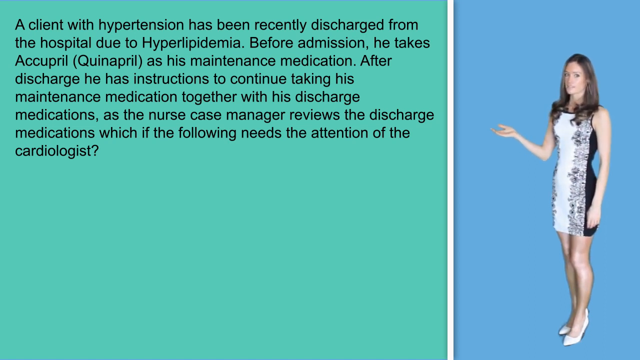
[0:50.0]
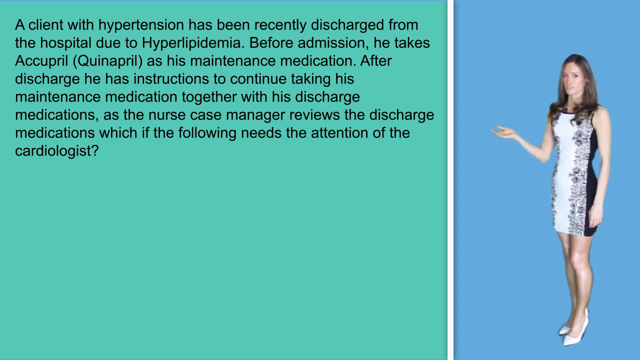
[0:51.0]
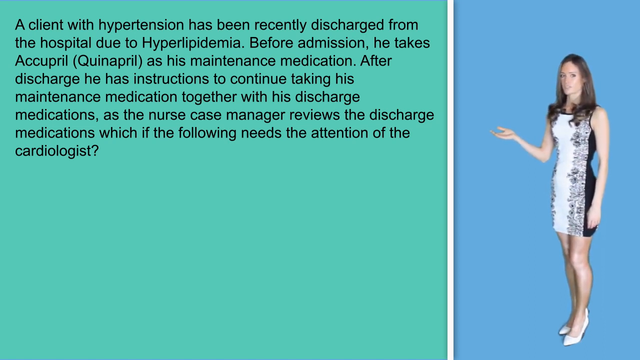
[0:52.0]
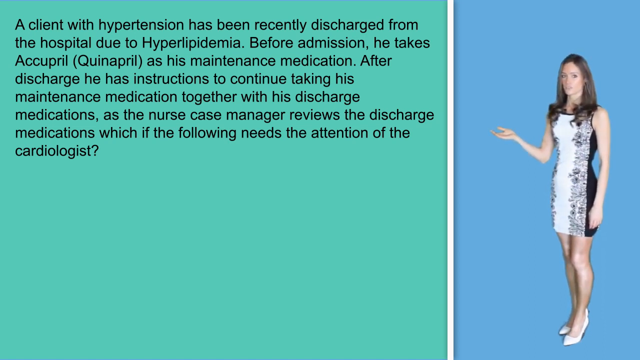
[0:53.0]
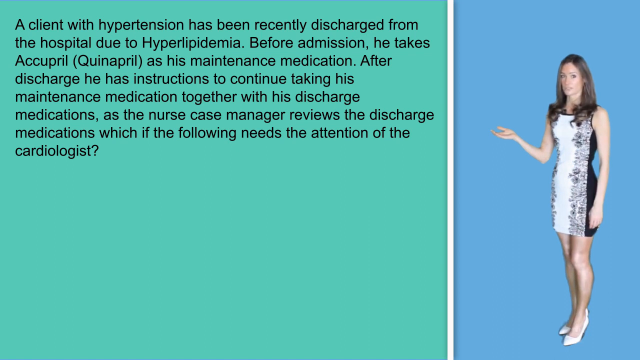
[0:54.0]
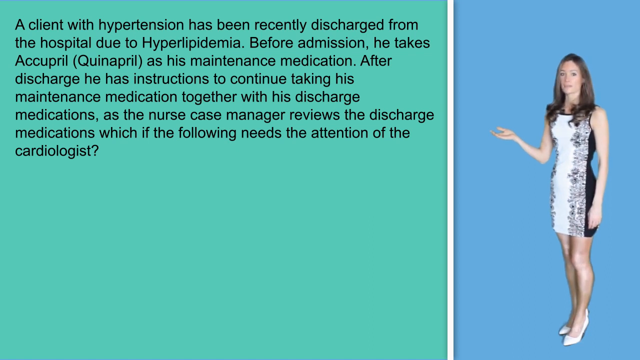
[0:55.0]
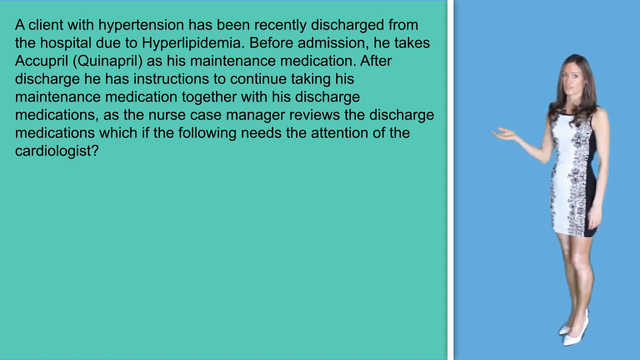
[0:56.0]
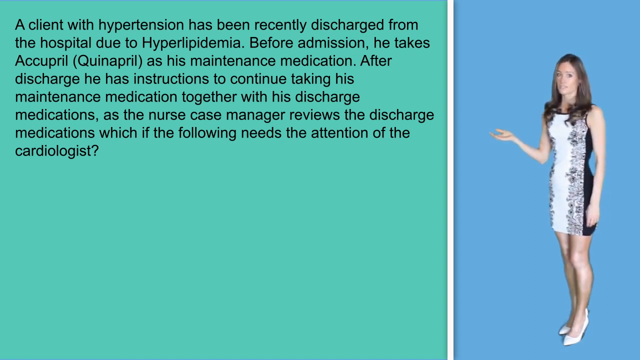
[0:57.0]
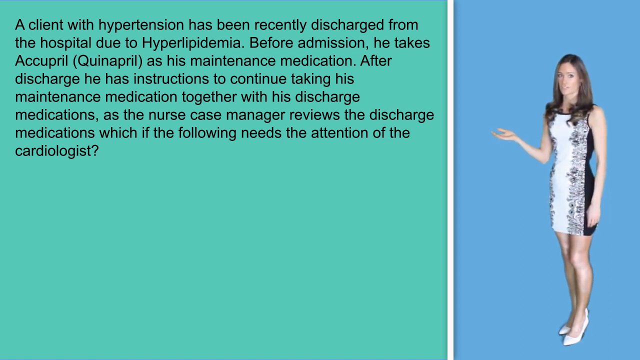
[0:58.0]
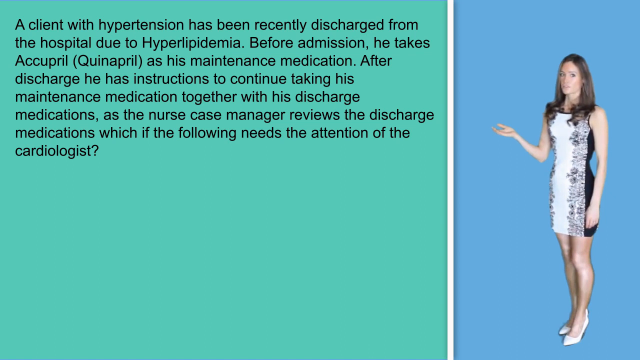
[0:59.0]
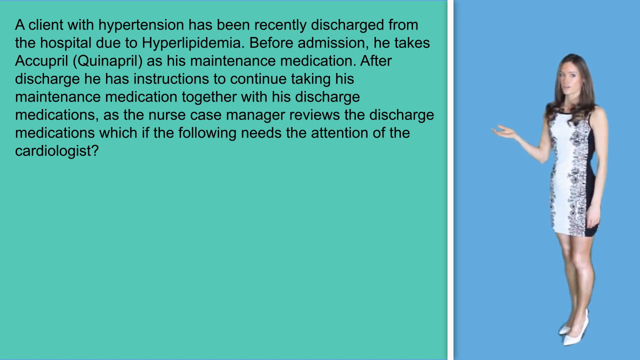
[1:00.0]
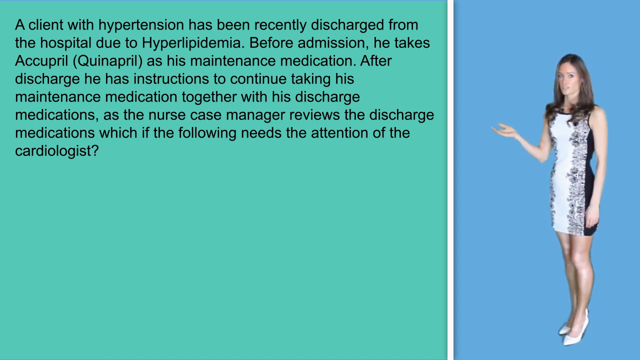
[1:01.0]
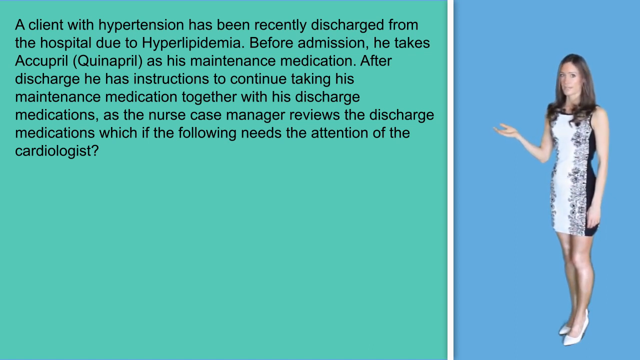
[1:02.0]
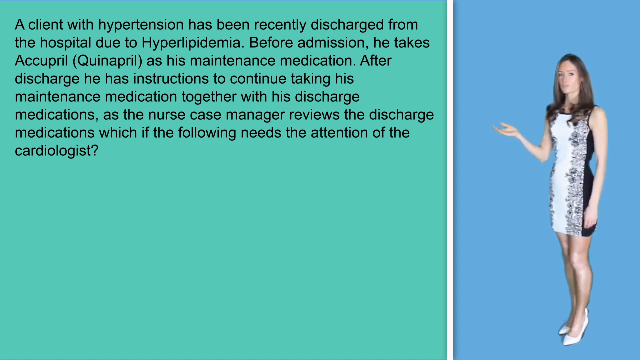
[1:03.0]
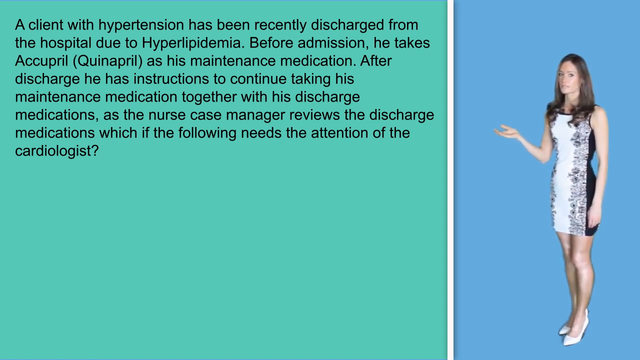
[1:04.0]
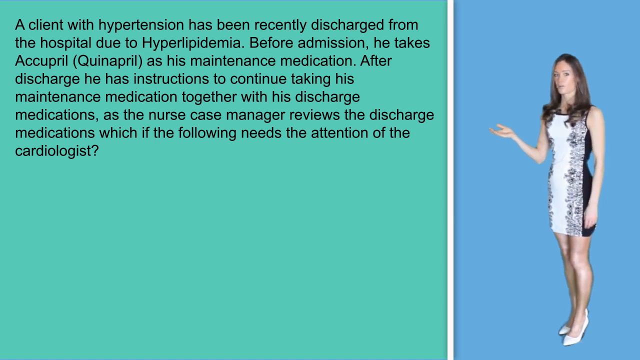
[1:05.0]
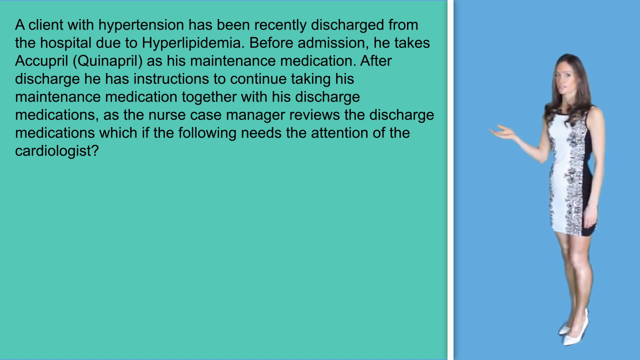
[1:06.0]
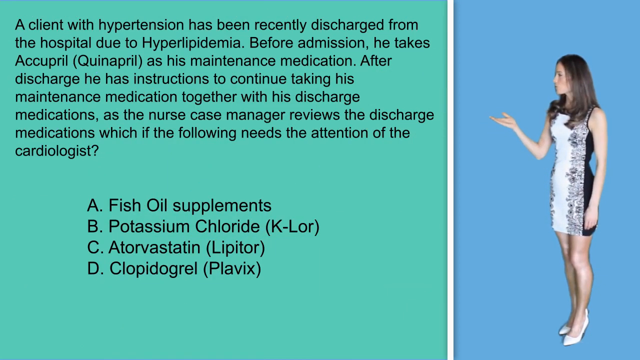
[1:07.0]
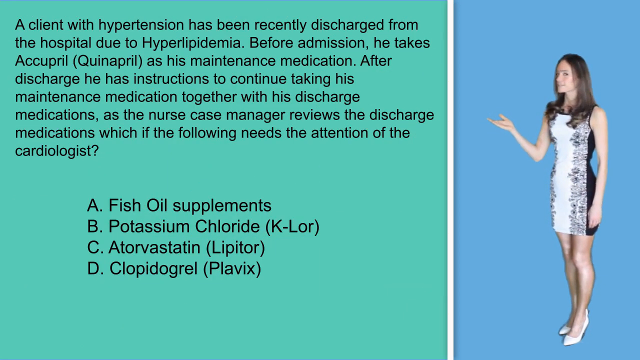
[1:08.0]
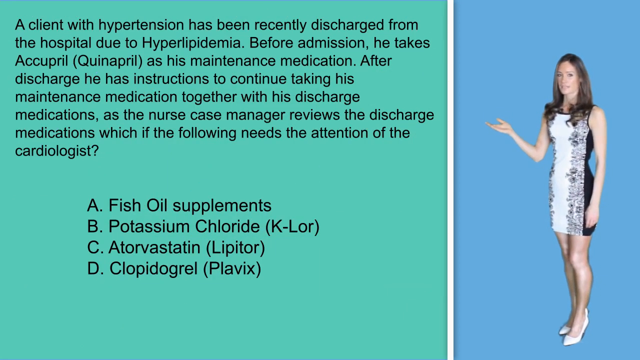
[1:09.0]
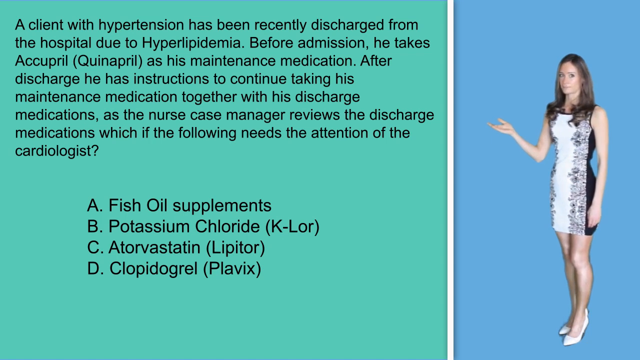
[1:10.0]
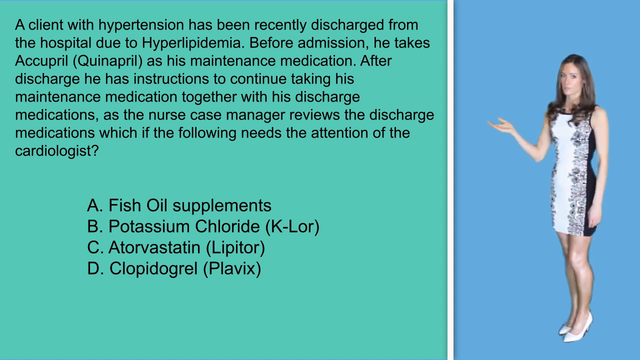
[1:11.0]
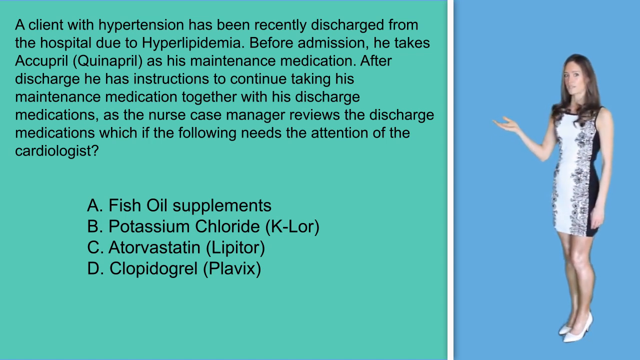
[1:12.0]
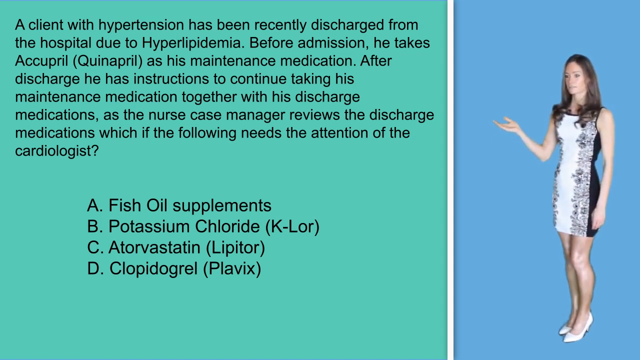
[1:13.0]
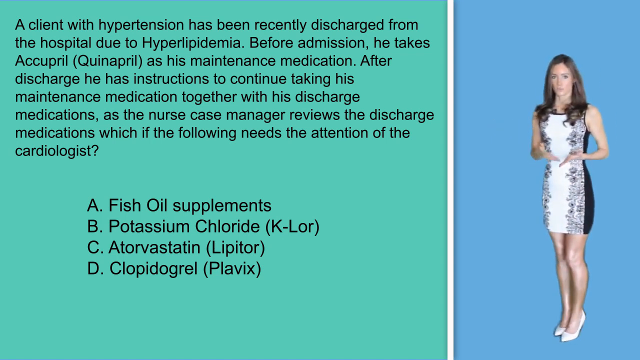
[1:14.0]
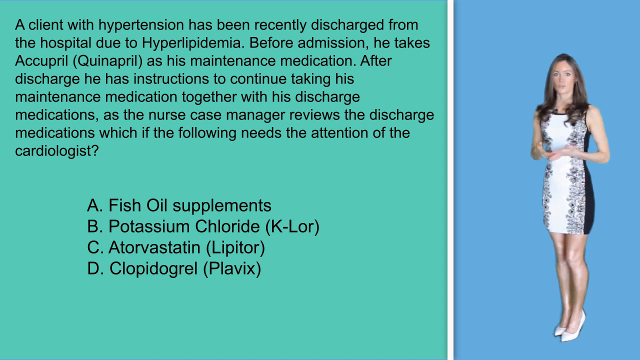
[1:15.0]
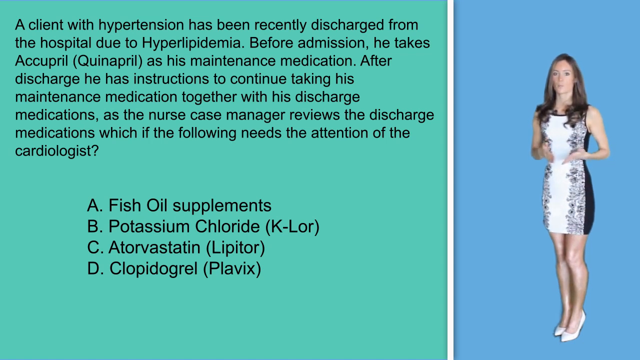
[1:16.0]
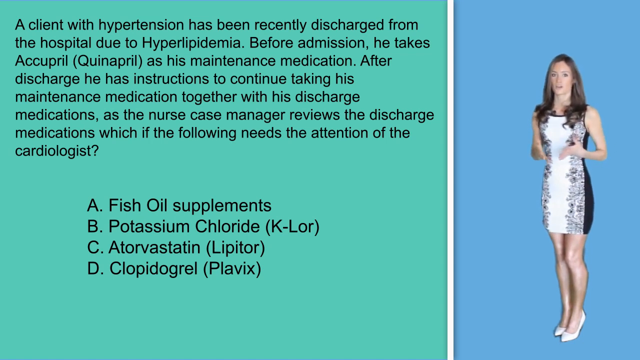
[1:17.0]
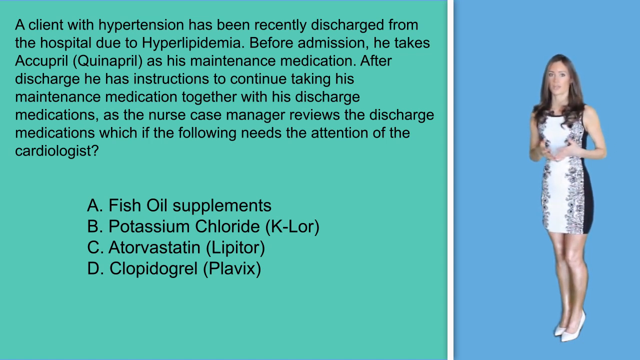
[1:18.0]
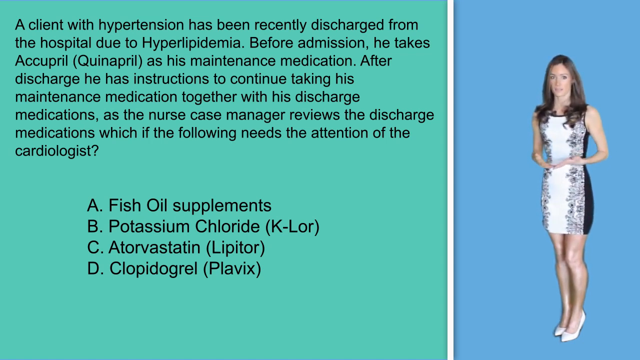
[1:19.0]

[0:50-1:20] On the right, the woman in the black and white floral dress, with long dark hair and thin white heels, is against a baby blue background. On the left, a robin's egg blue background carries black text: "A client with hypertension has been recently discharged from the hospital due to hyperlipidemia. Before admission he takes Quinapril as his maintenance medication. After discharge he has instructions to continue taking his maintenance medication together with his discharge medications. As the nurse case manager reviews the discharge medications which of the following needs the attention of the cardiologist." She sort of gestures toward the question with her hand as the shot lingers on it. A brief, somewhat psychedelic transition effect in black, pink and white follows, and answer options lettered A through D appear: "A fish oil supplements", "B potassium chloride", "C Lipitor", "D Plavix". She keeps speaking, her hand bent out toward the question, and the shot continues to linger on it.